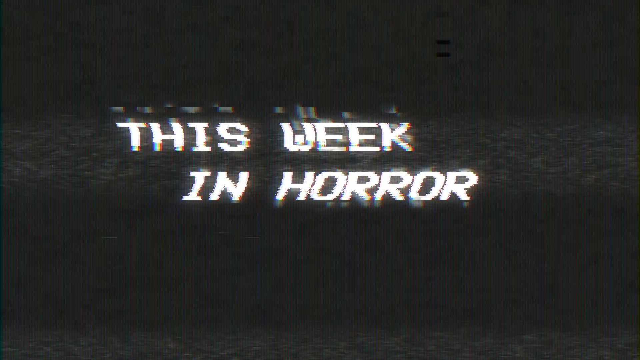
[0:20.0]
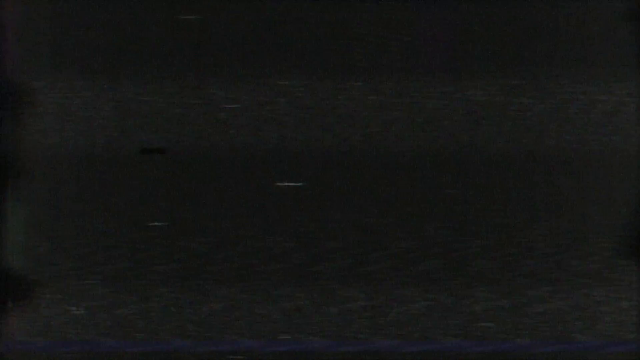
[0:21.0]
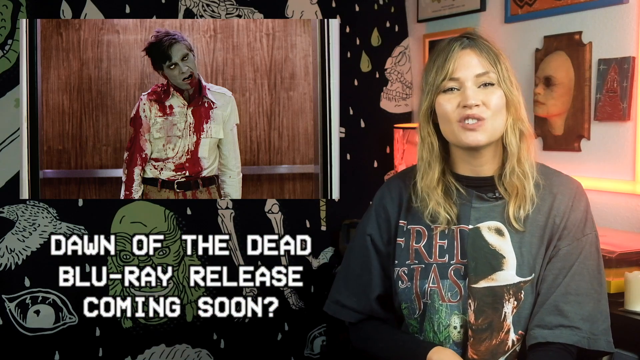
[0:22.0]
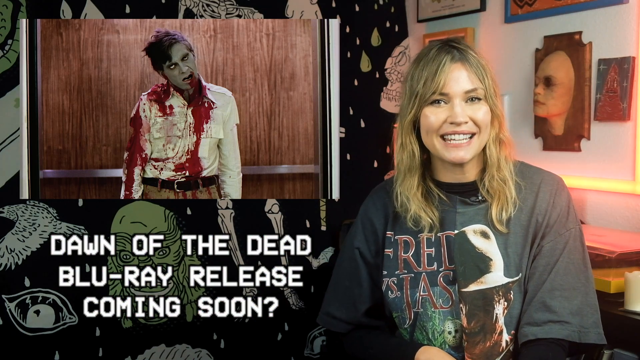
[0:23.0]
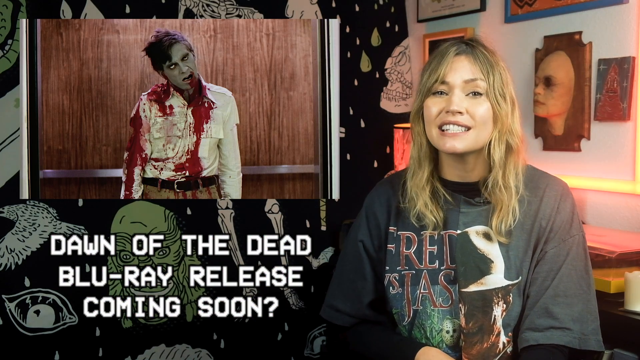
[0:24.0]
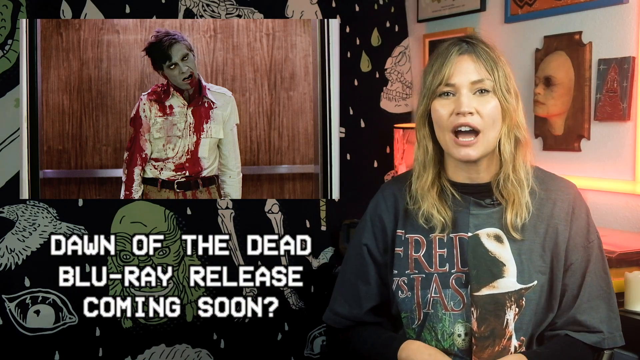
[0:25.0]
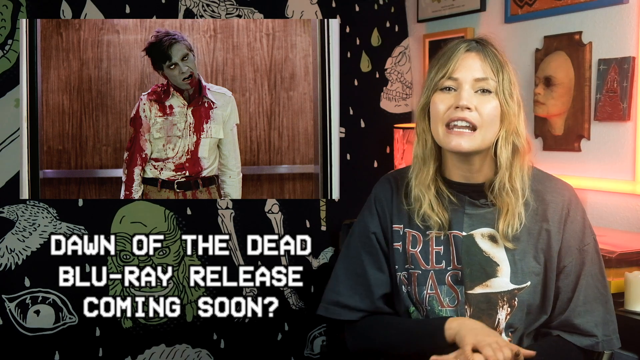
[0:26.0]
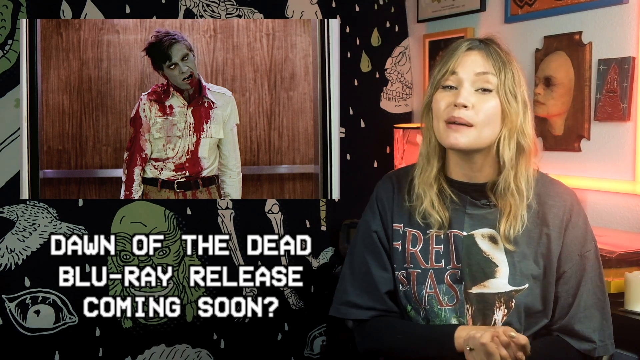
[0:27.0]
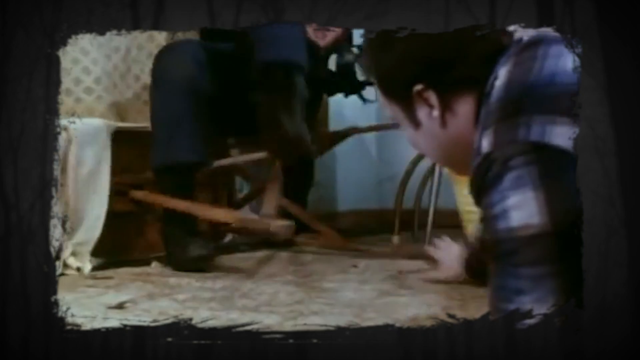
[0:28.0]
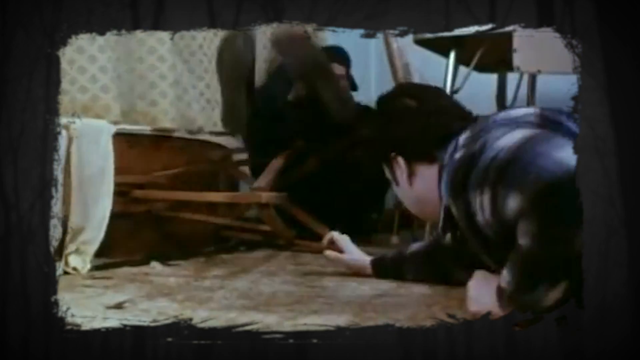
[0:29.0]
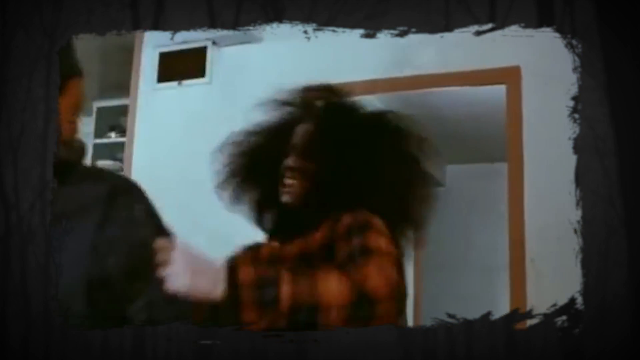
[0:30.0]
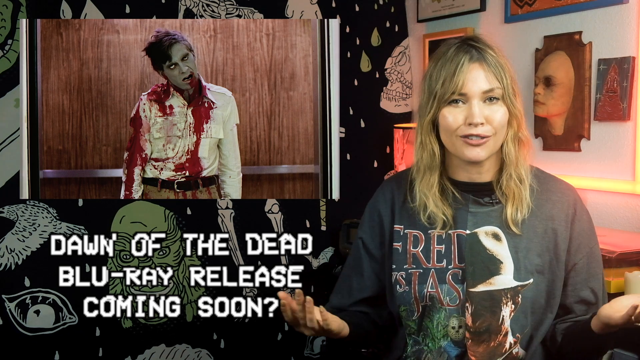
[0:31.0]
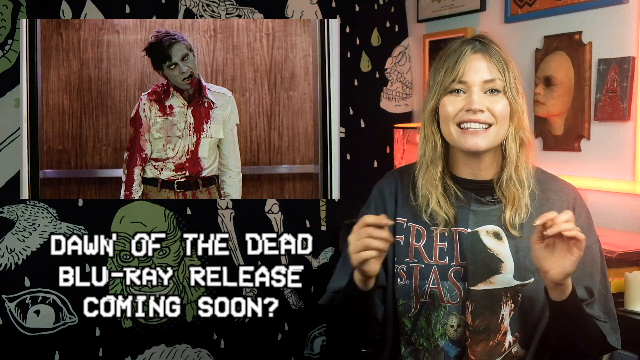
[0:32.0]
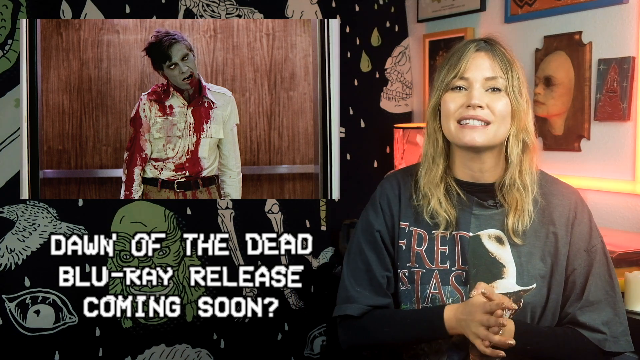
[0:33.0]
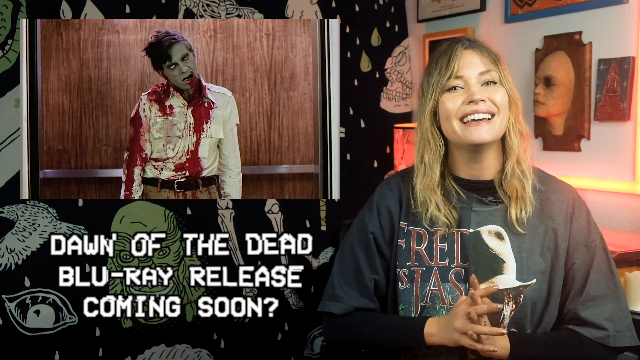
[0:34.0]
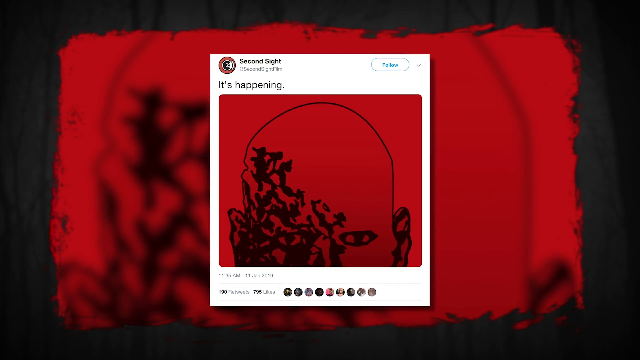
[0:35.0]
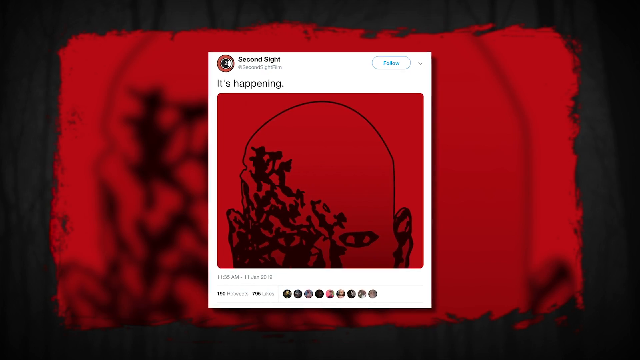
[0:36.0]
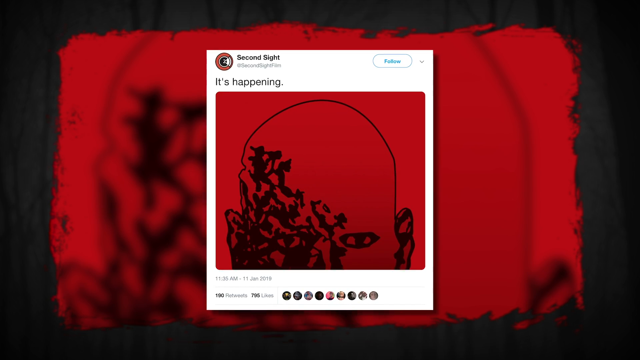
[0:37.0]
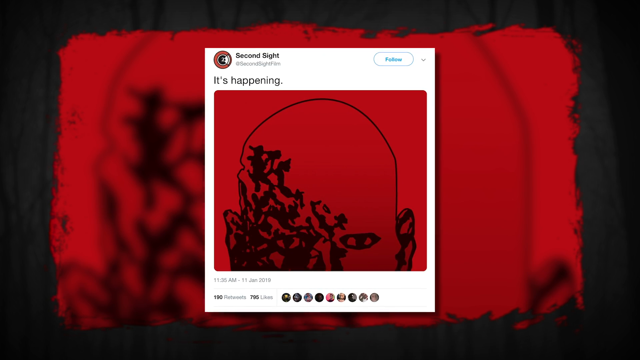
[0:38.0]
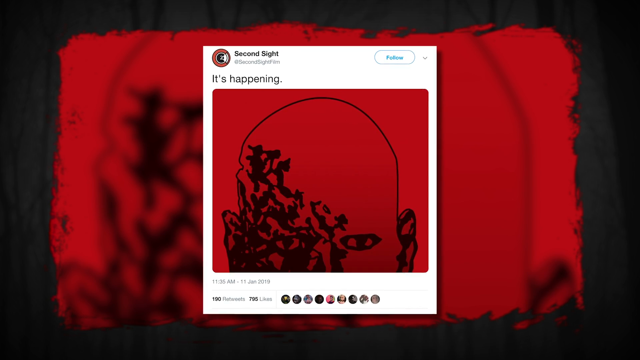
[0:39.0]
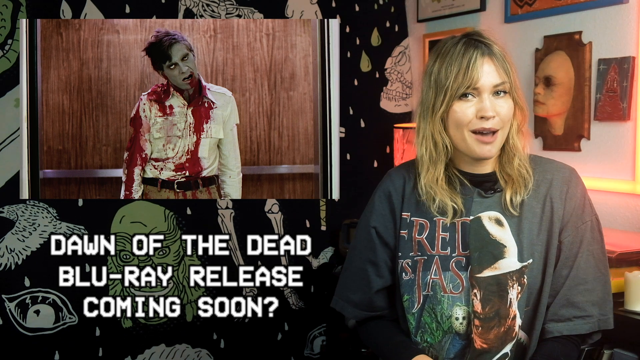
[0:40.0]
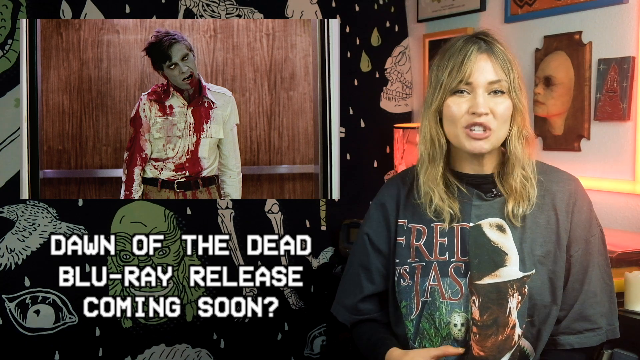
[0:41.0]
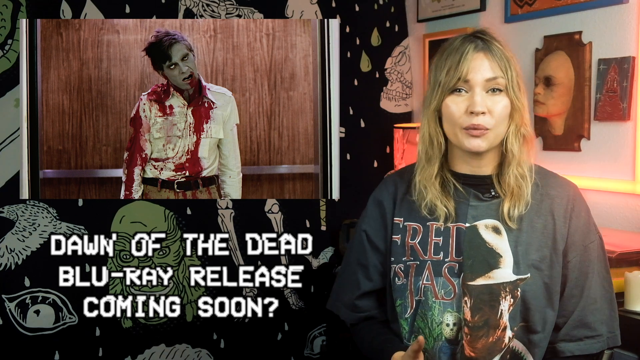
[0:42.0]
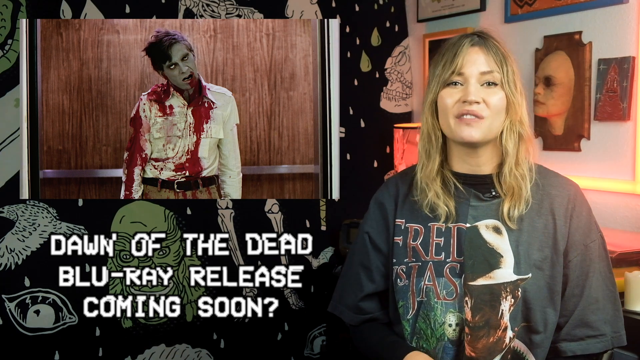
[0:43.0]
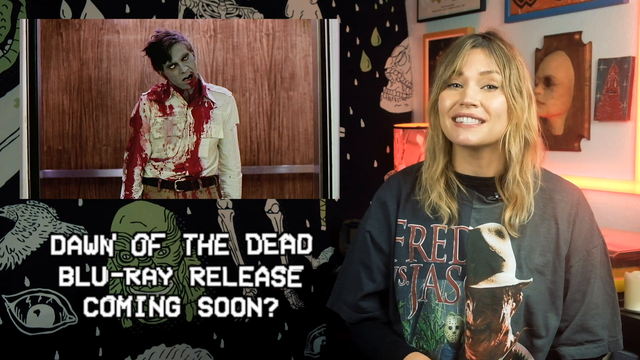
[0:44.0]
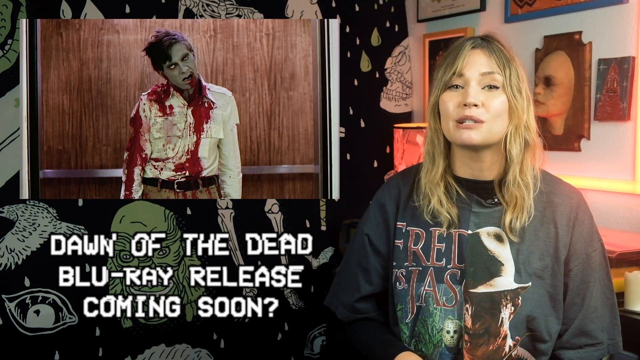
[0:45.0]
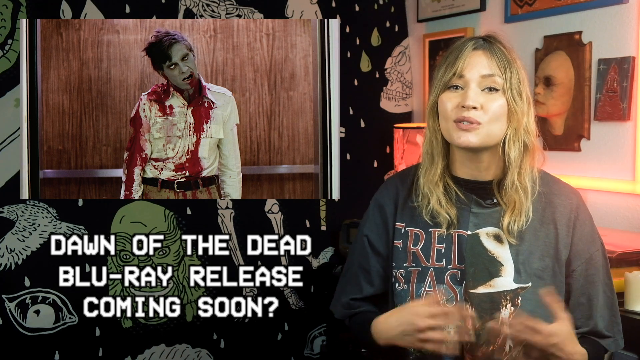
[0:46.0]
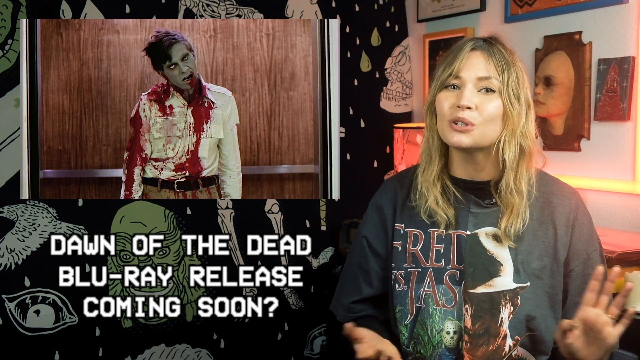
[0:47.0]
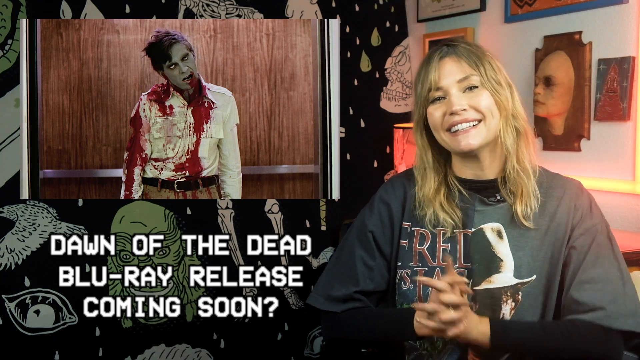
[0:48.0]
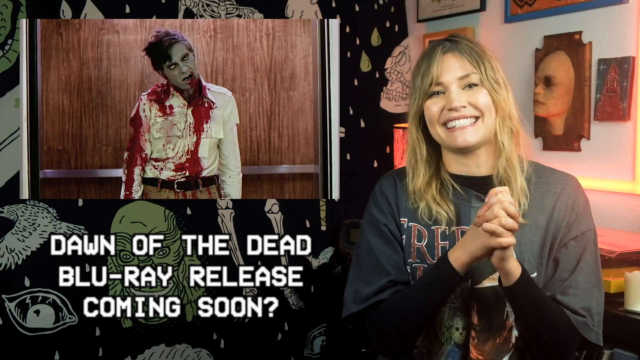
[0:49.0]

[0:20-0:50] A white caption reading "This week in horror" appears on a black background. The screen flashes away and Whitney appears again as the next topic, a movie called Dawn of the Dead, comes up. A photo shows a scary zombie with blood all over his white shirt, a black belt and brown trousers. A short part is played showing people fighting. Next, a social media post is shown that says "It's happening," and Whitney seems very glad.